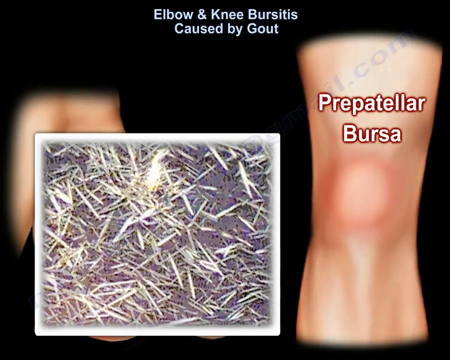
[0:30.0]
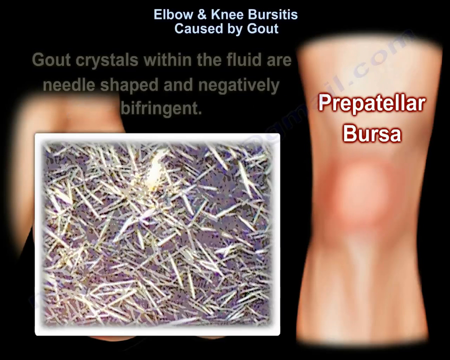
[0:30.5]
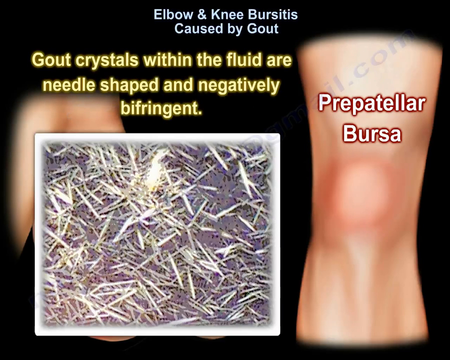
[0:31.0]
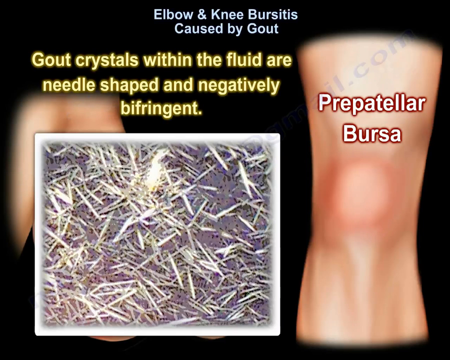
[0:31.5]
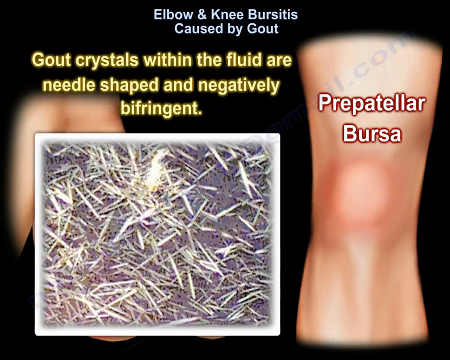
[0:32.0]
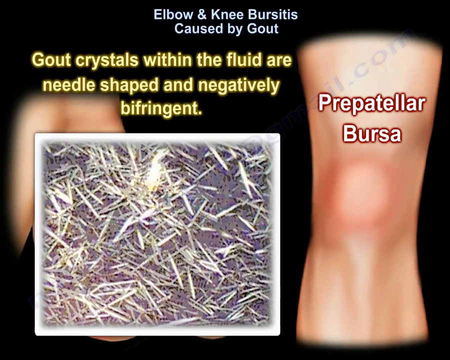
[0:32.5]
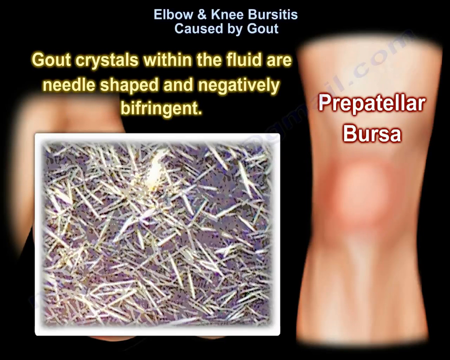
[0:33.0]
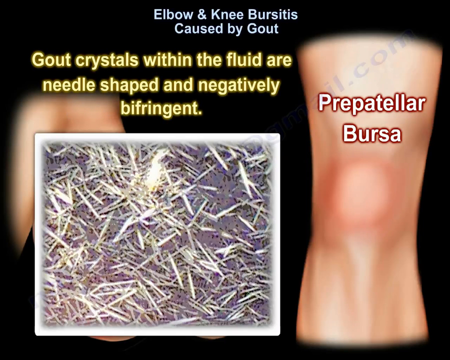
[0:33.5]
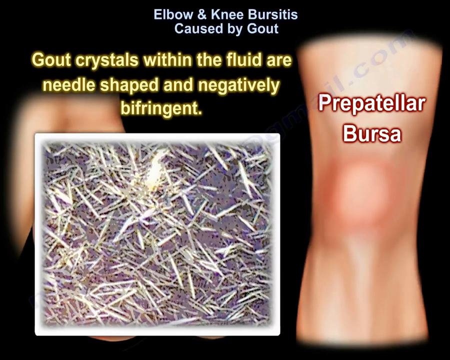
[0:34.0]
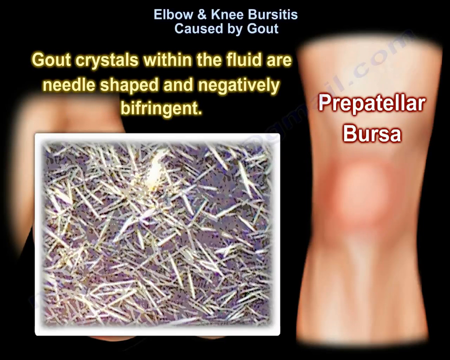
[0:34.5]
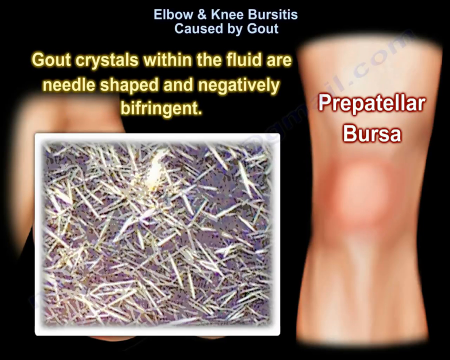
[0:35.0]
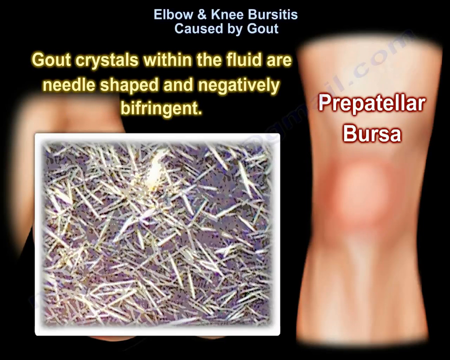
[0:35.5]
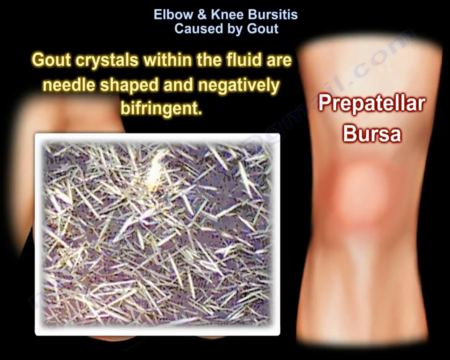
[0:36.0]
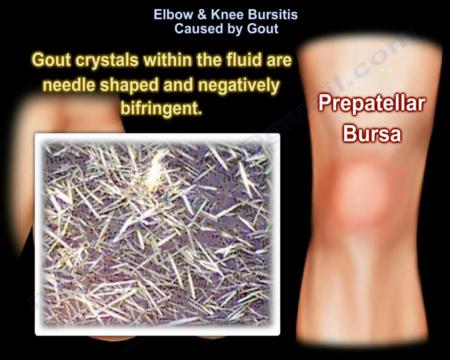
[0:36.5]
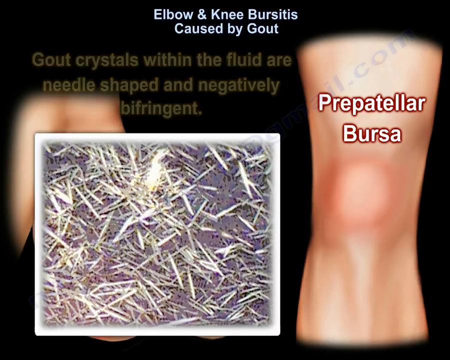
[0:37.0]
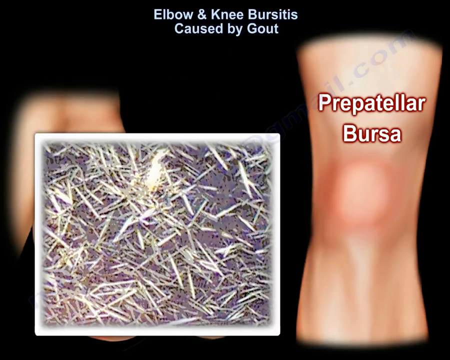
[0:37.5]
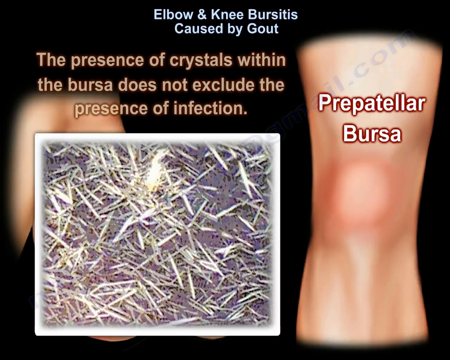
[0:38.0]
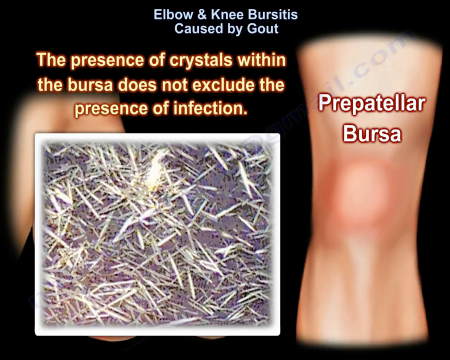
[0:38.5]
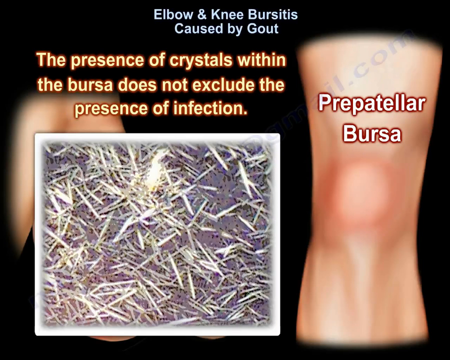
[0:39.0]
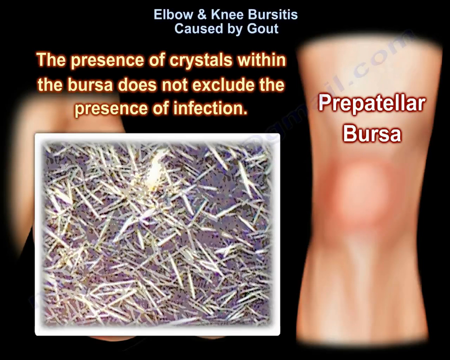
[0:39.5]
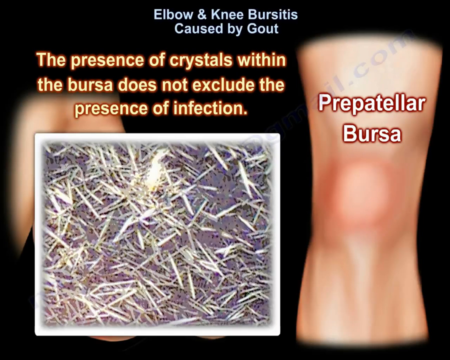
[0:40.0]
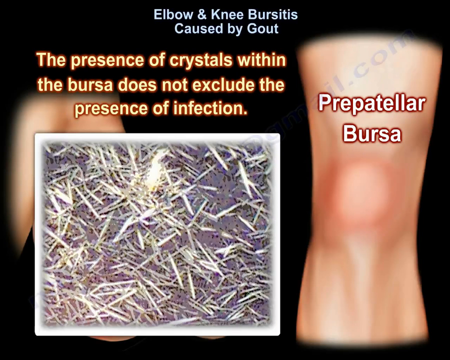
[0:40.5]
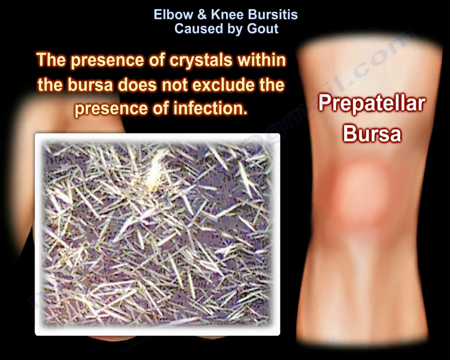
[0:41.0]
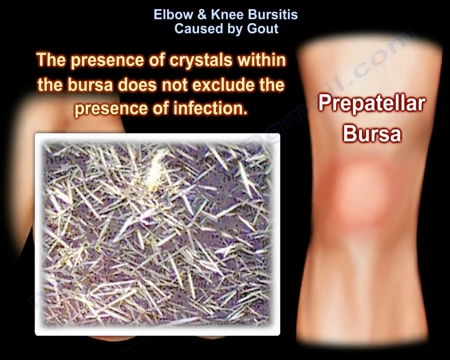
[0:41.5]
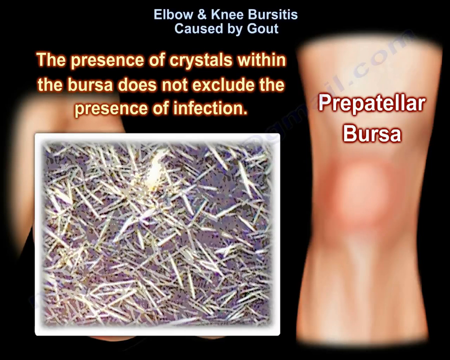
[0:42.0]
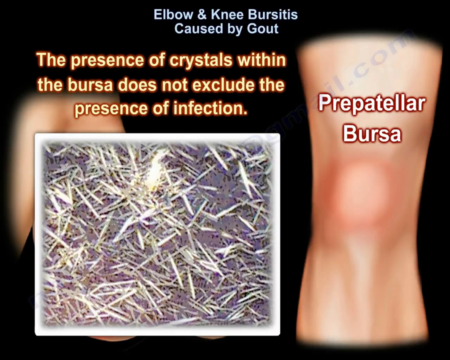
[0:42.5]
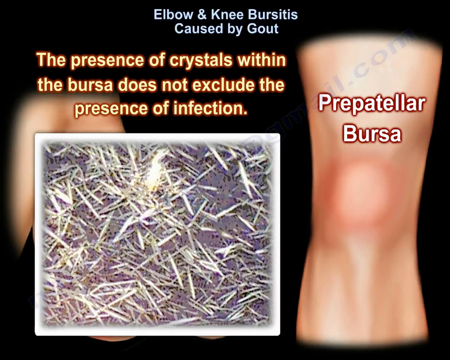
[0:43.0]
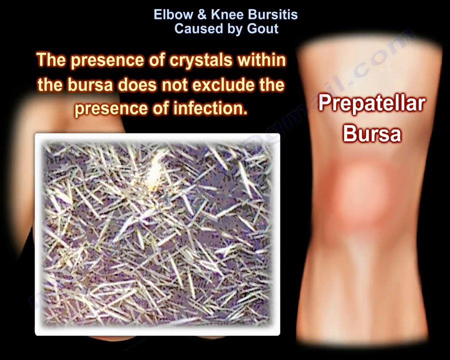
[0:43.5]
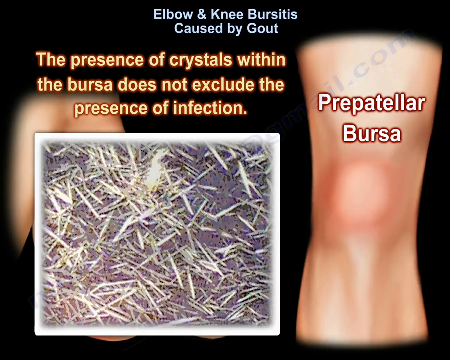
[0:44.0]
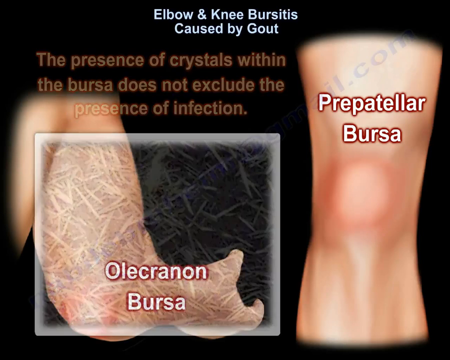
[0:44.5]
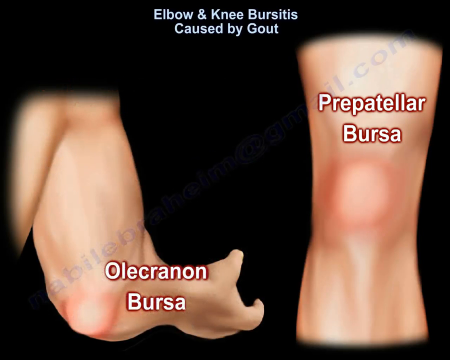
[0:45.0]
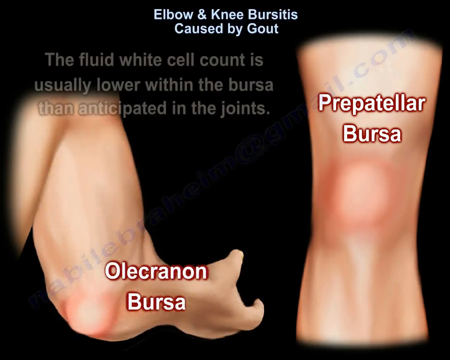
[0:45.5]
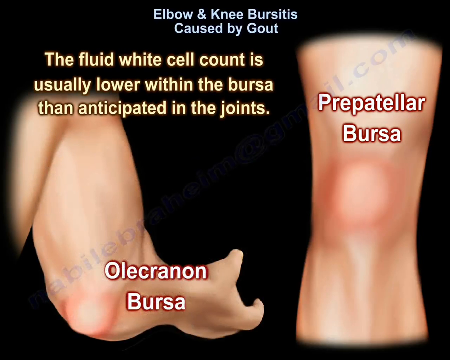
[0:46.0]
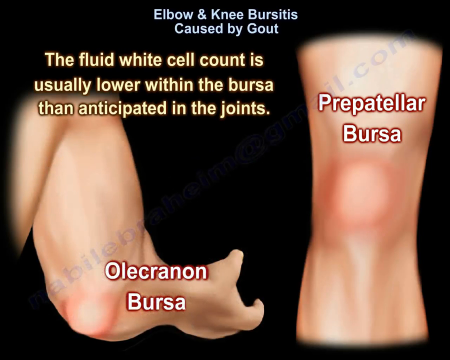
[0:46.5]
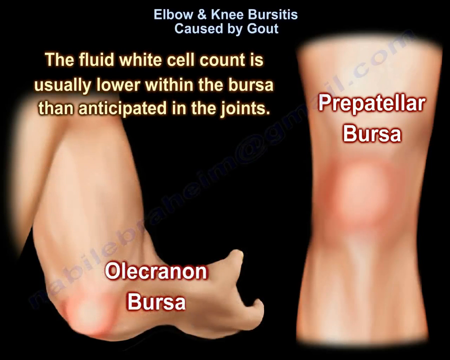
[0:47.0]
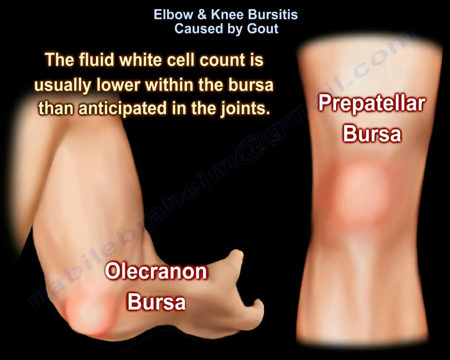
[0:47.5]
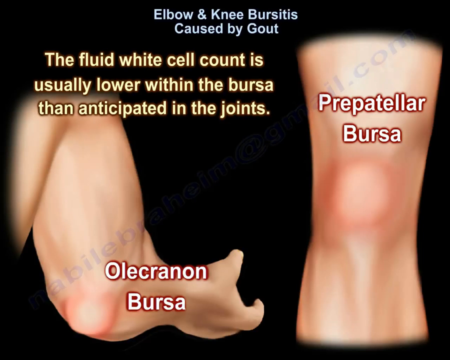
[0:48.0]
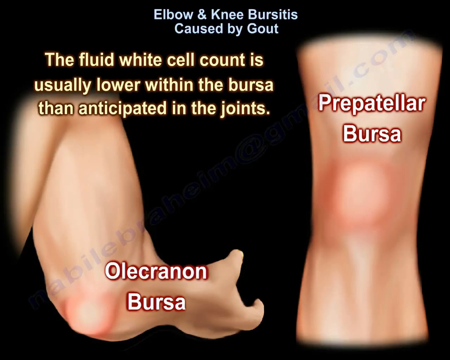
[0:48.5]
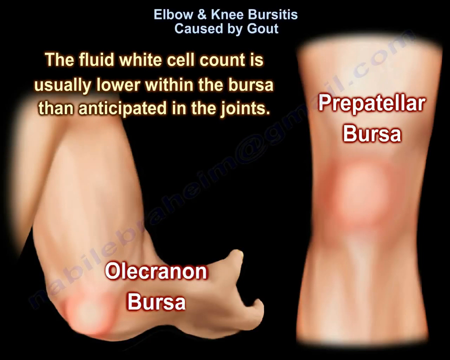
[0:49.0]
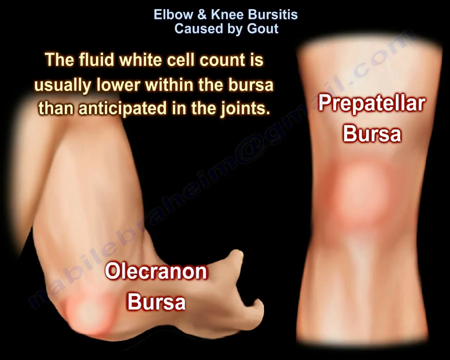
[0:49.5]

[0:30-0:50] An image of a knee is shown with "pre patellar bursa" in smaller font on the black screen, along with a small title reading "elbow and knee bursitis caused by gout". Next to the knee is a picture with what look like little white flecks all around. Above the image of what looks like little white string, gold letters pop up: "gout crystals within the fluid are needle shaped". The image apparently depicts what gout crystals look like. Glowing orange text then pops up: "the presence of crystals within the bursa does not exclude the presence of infection". The image of the white crystals disappears, and yellow-gold text reads "the fluid white cell count is usually lower within the bursa than anticipated in the joints".